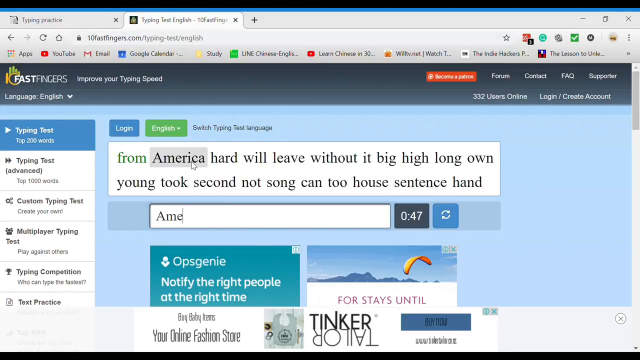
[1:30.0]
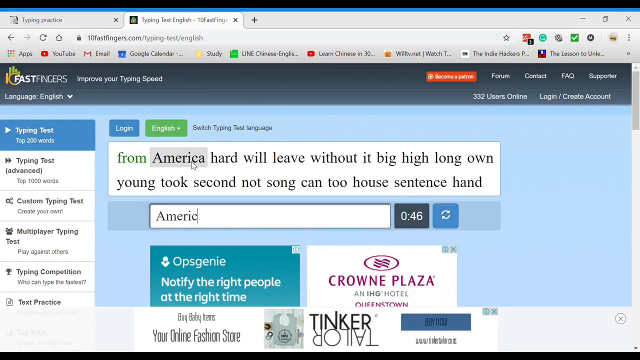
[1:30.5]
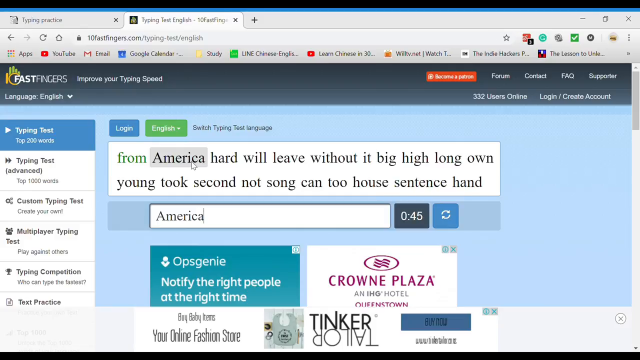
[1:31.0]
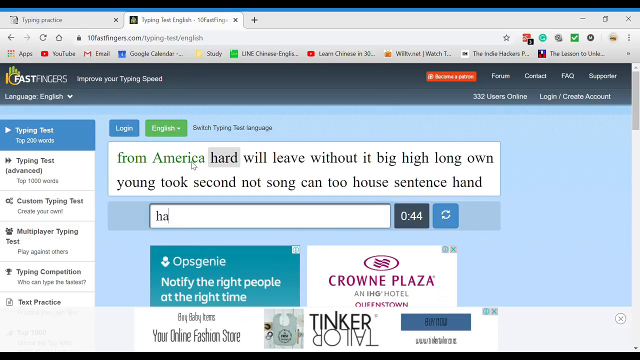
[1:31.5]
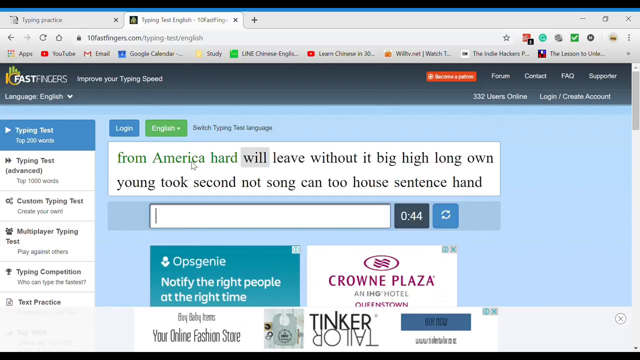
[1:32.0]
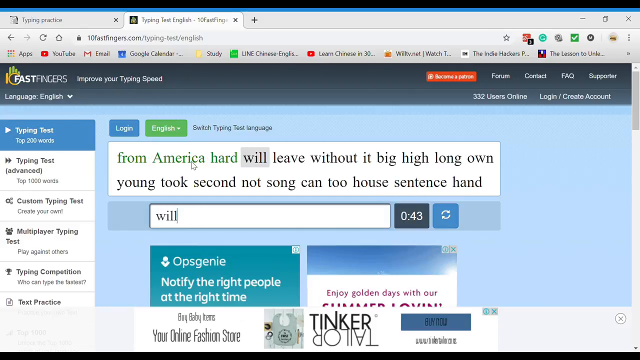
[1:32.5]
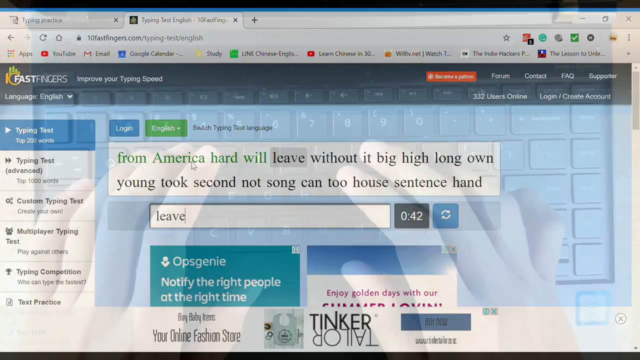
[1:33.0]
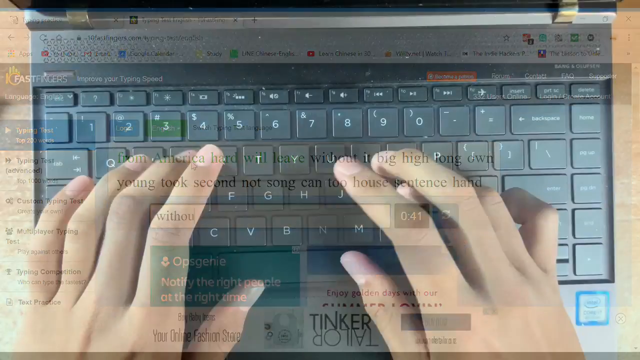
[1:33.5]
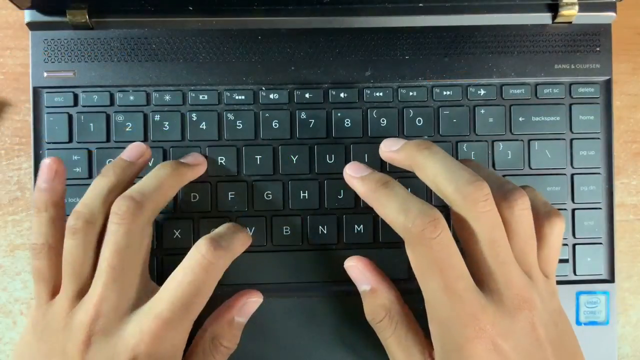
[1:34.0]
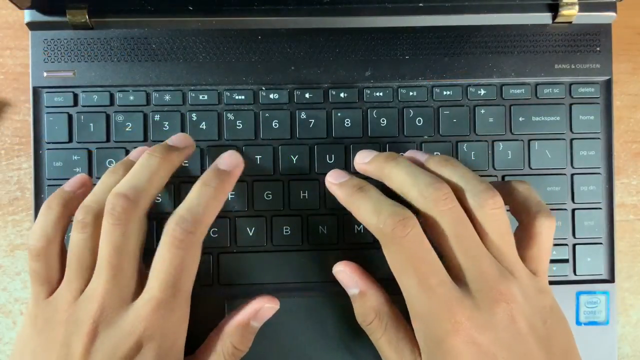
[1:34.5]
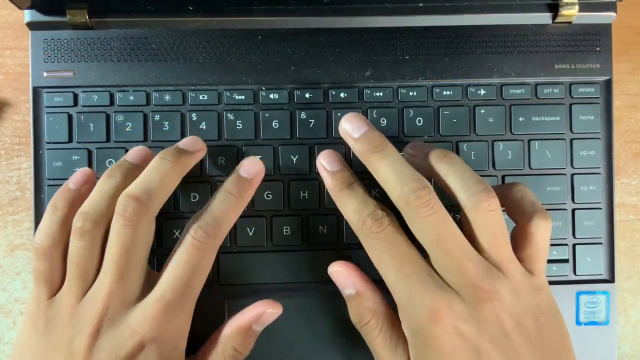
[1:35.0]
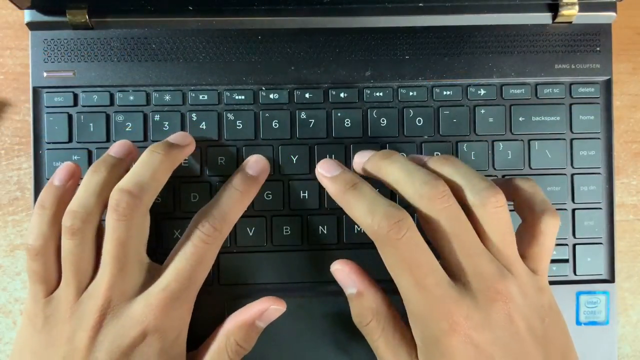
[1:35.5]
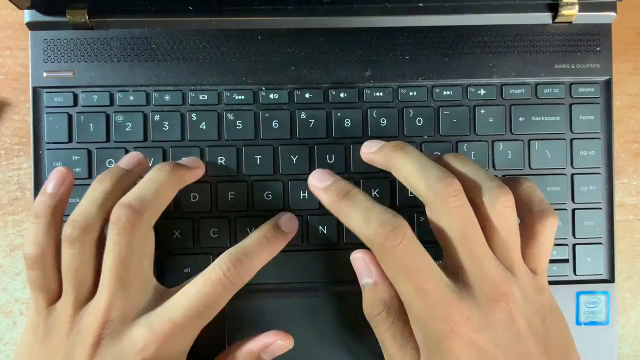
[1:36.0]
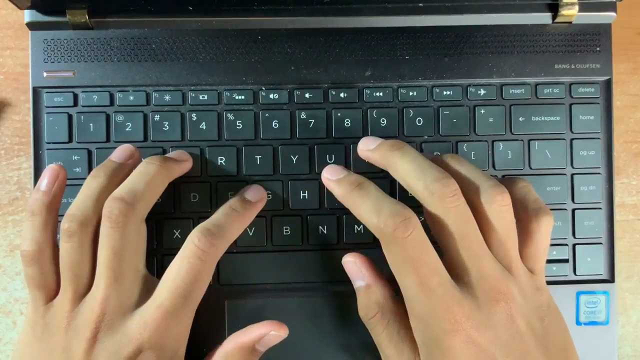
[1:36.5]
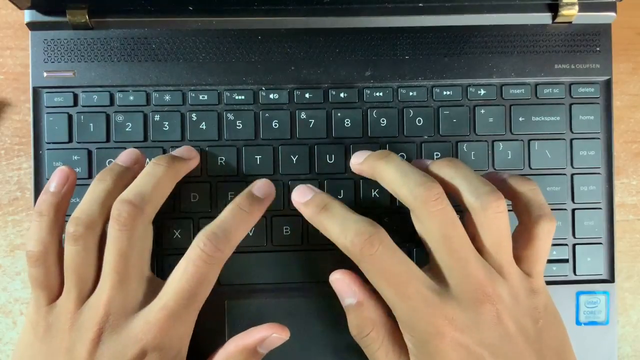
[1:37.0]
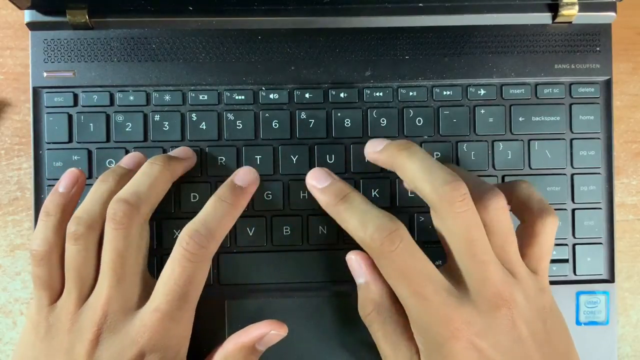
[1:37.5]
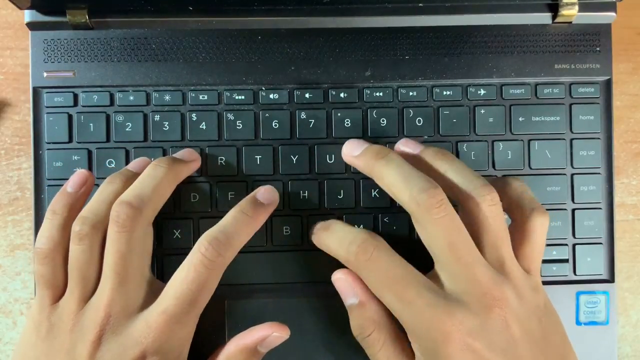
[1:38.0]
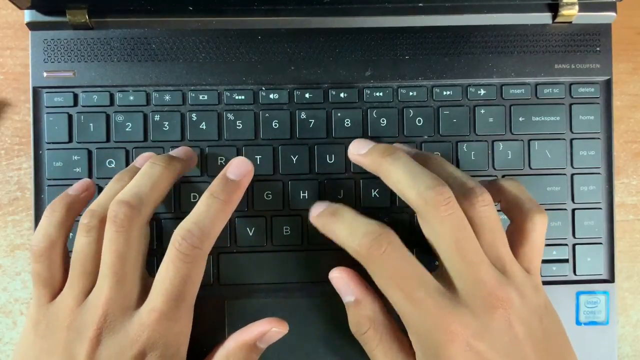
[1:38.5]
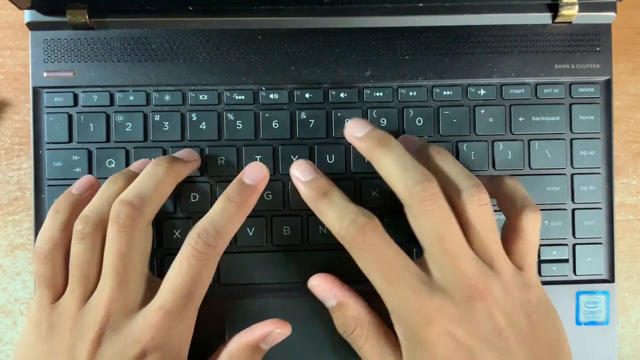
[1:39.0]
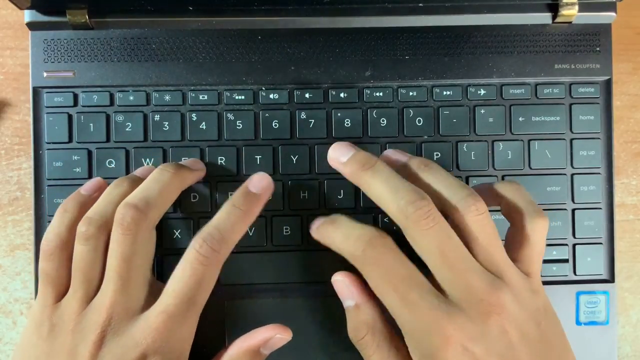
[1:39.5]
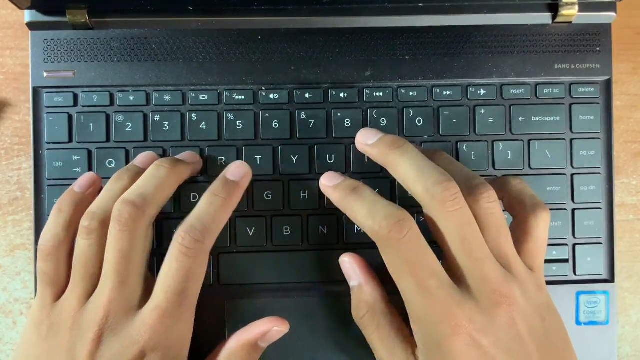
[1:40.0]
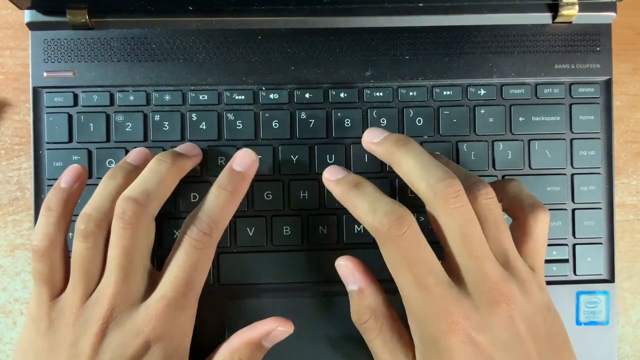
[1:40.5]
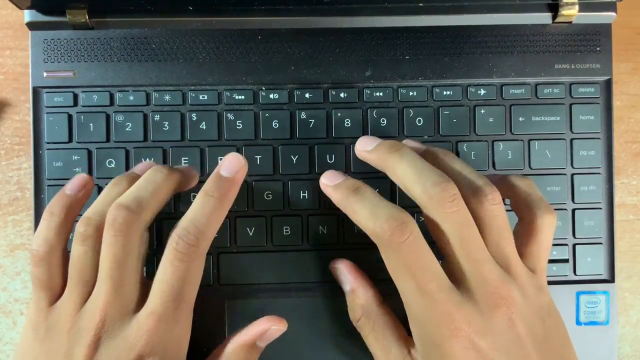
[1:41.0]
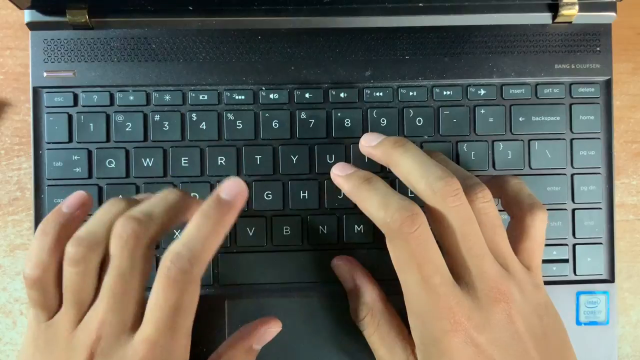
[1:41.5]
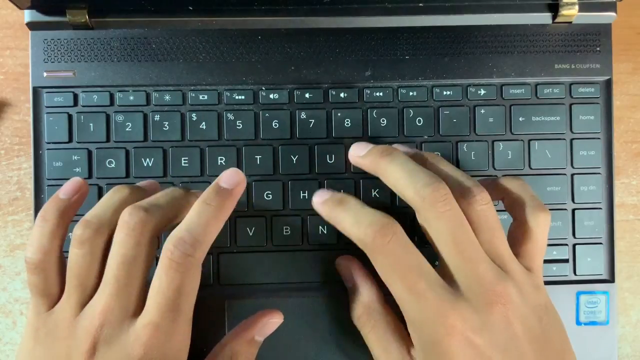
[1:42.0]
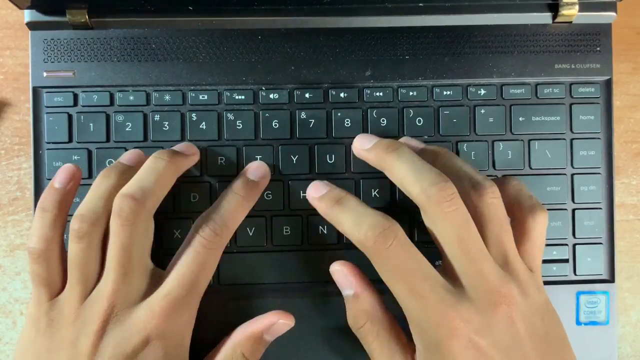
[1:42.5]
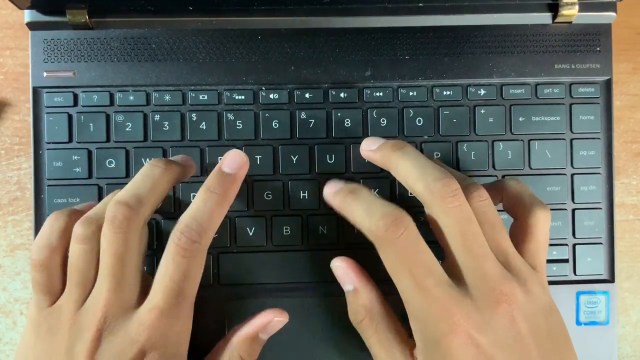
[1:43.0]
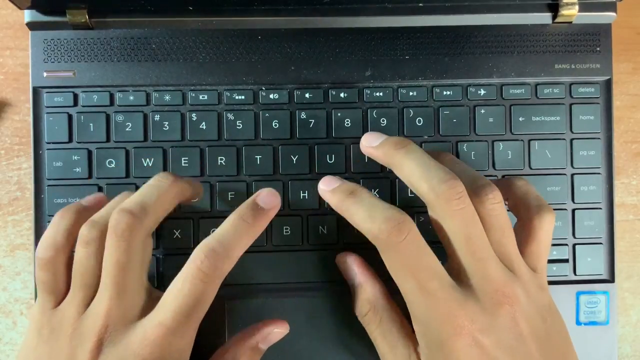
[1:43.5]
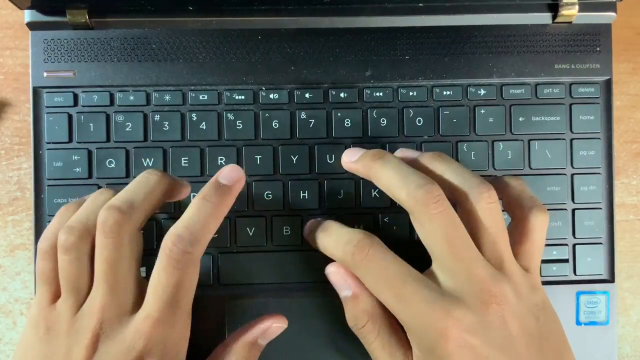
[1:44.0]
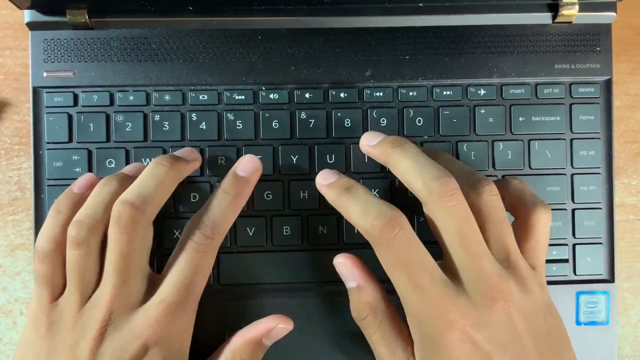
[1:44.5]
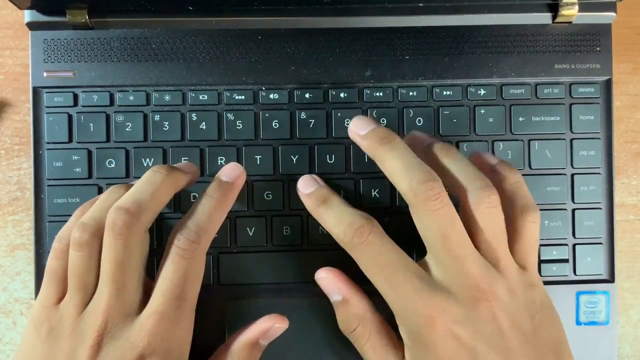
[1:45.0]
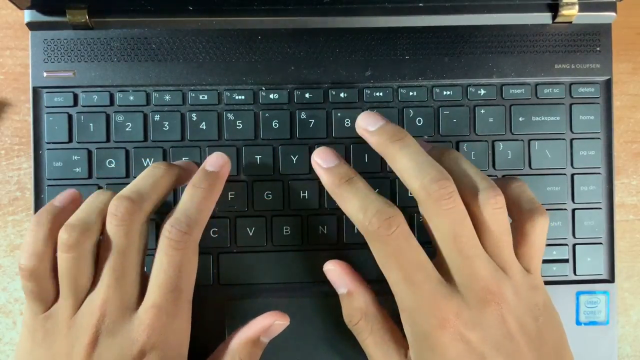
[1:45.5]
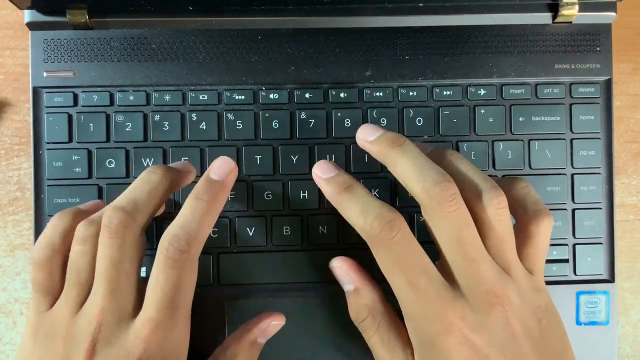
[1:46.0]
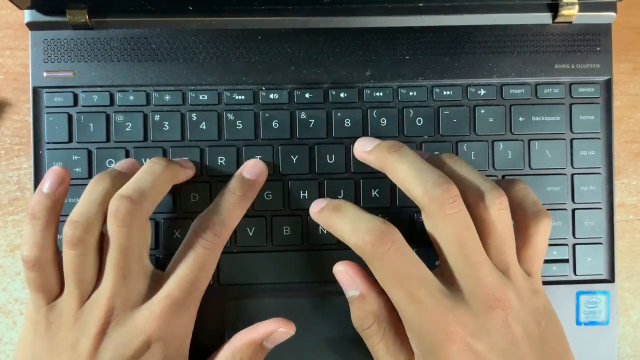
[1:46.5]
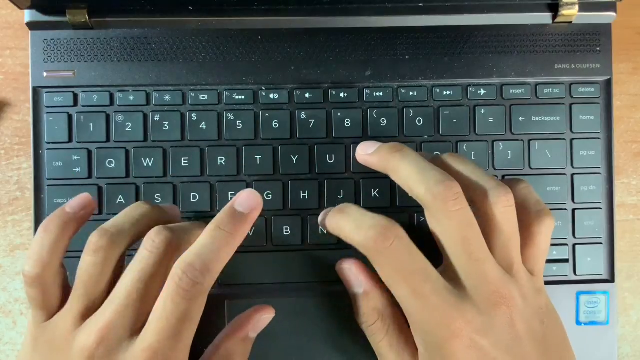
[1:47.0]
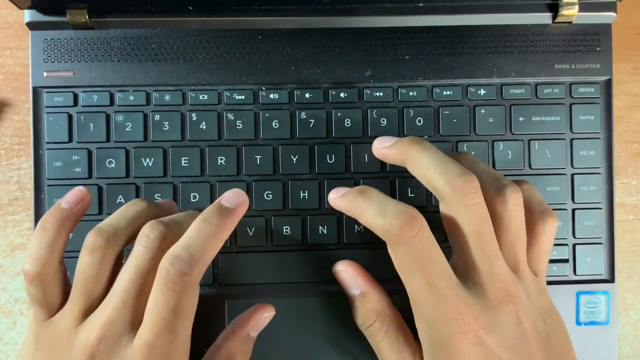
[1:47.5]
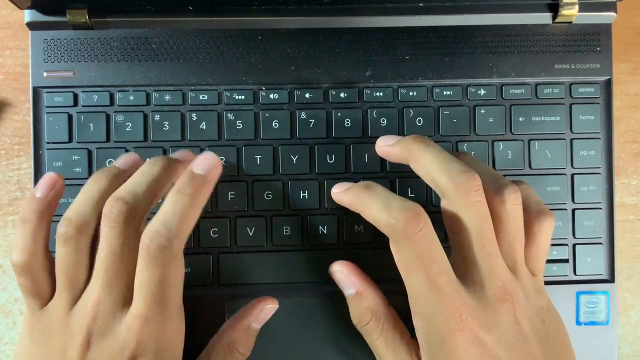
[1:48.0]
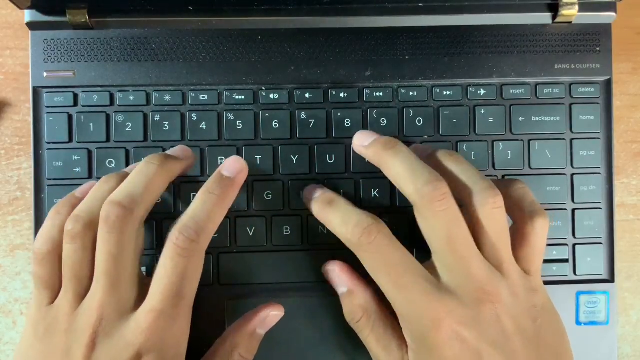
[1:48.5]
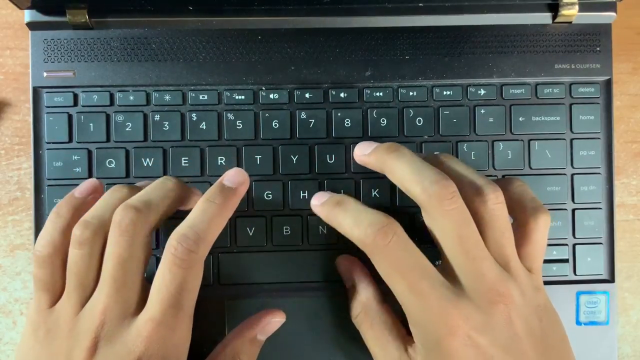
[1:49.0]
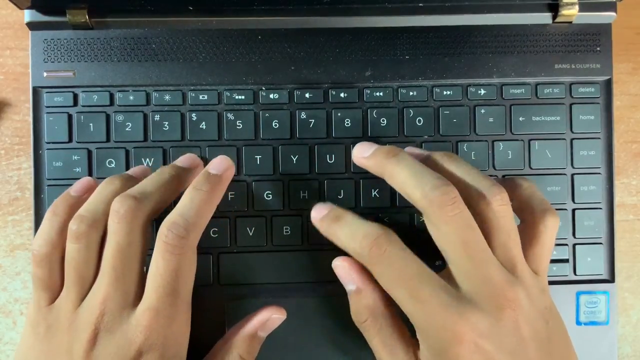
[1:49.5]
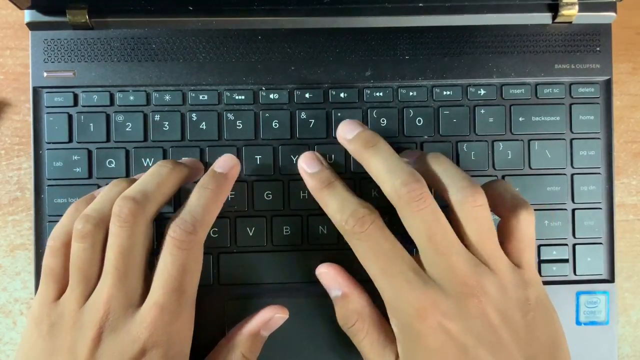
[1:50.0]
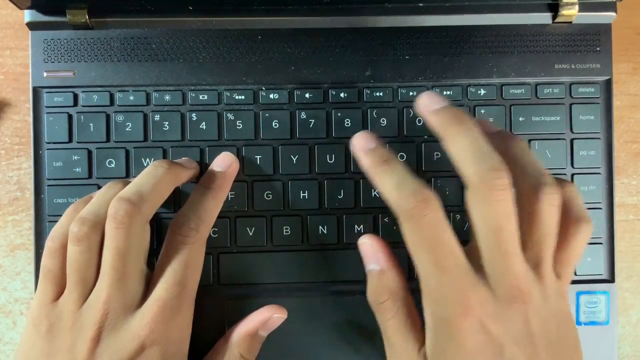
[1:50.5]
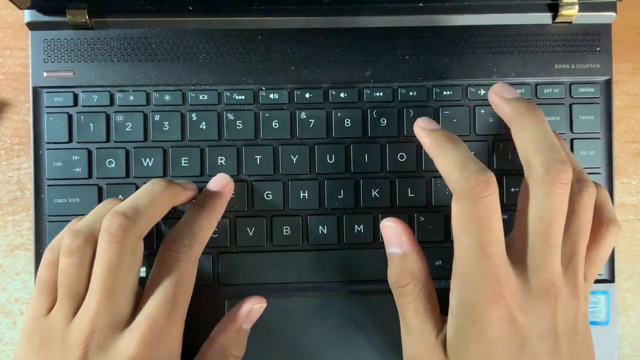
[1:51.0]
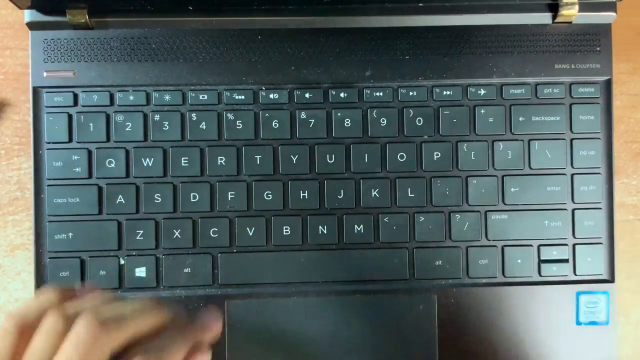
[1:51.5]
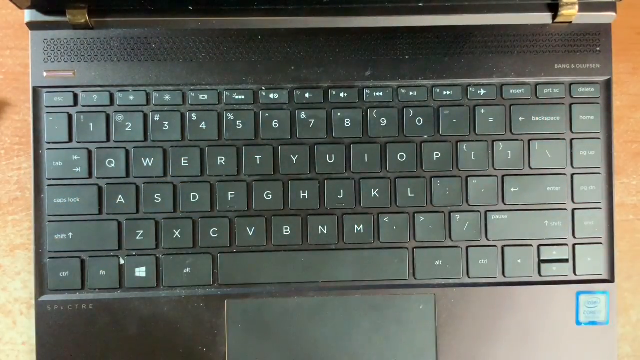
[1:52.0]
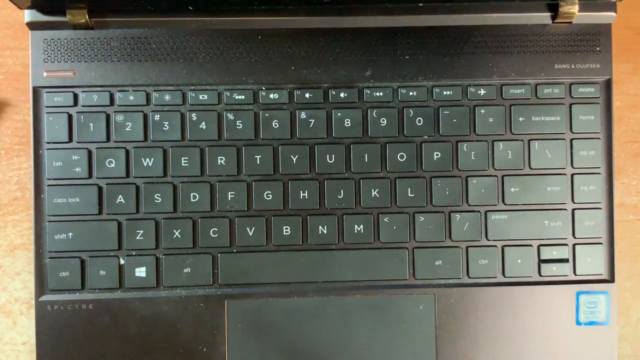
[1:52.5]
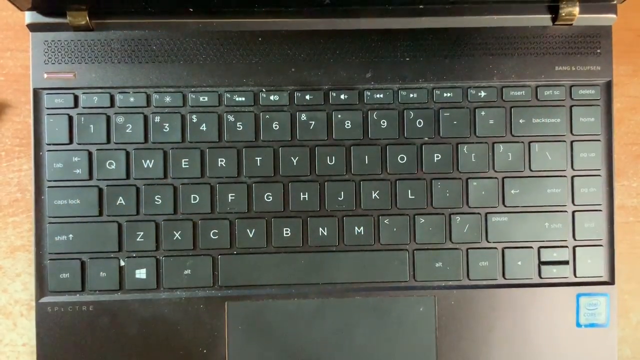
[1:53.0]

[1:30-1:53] The man is typing the words from the test on the website into the empty space for the typing test. There is a timer on the right side beside the white space where he types the words, and a reset button beside the timer. The scene fades to an overhead view of his keyboard, where his hands type certain letters at a fast pace. He continues typing, pressing each letter needed, with his right thumb on the space bar and his left thumb in the air. Near the end he slowly moves his hands away from the keyboard, leaving just the aerial view of the keyboard itself with no hands above it.